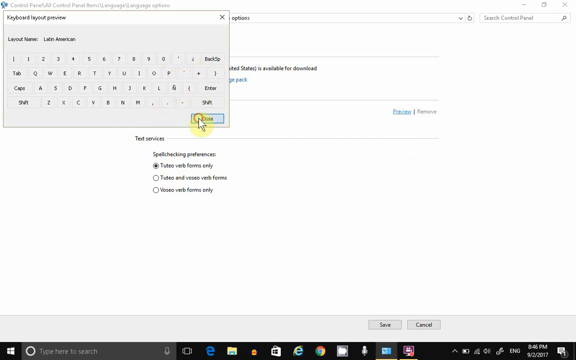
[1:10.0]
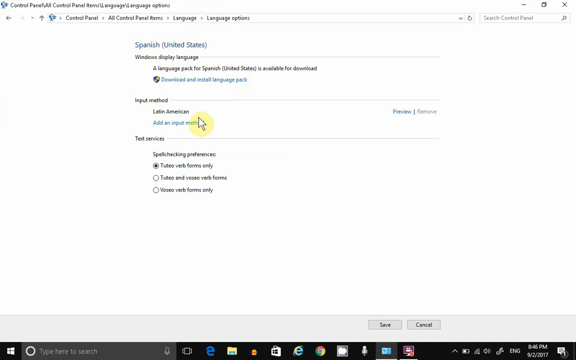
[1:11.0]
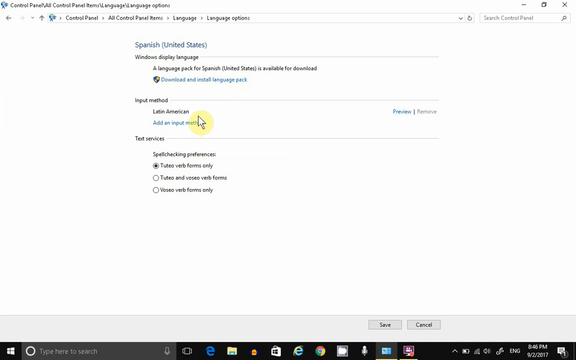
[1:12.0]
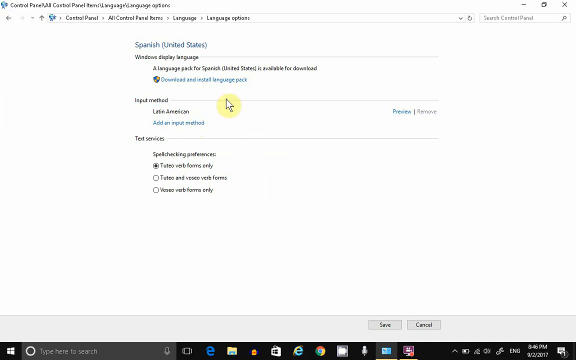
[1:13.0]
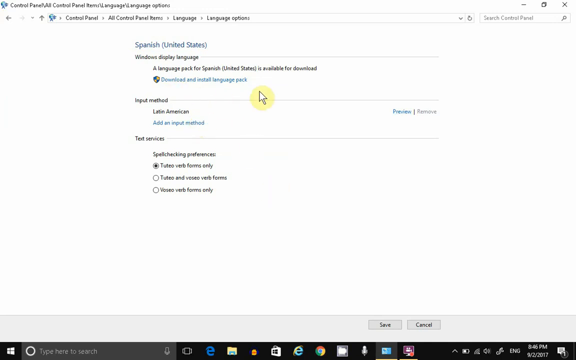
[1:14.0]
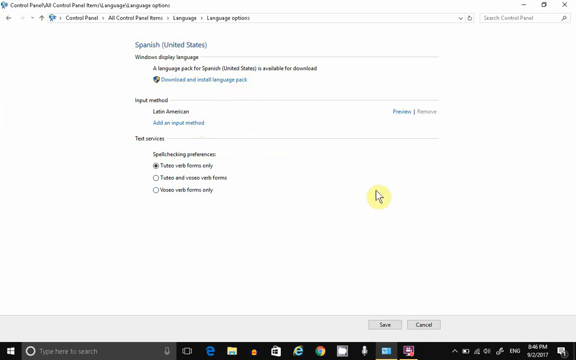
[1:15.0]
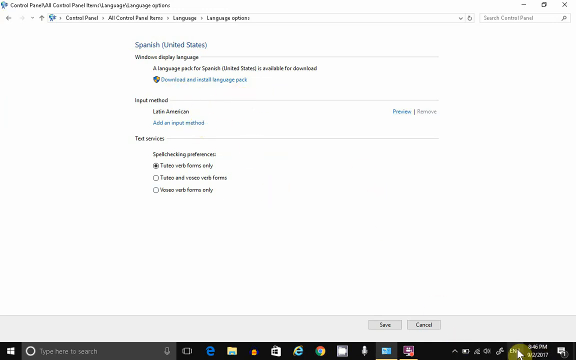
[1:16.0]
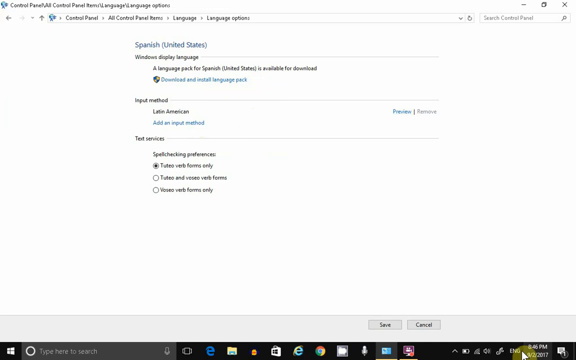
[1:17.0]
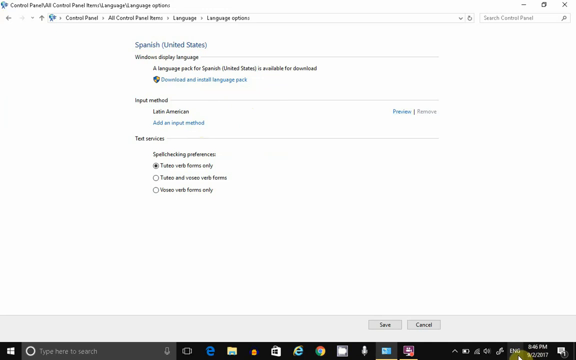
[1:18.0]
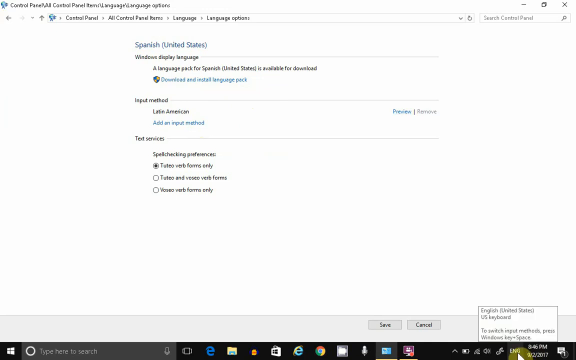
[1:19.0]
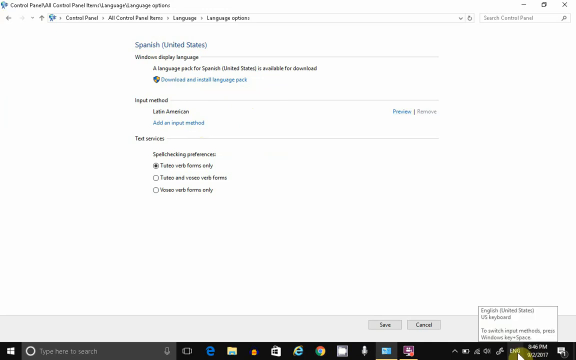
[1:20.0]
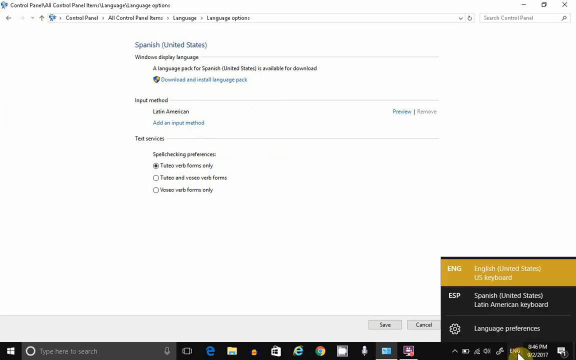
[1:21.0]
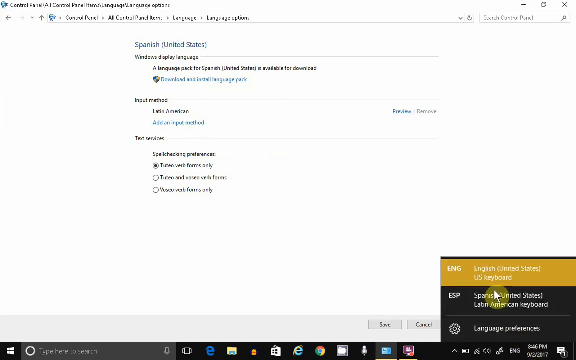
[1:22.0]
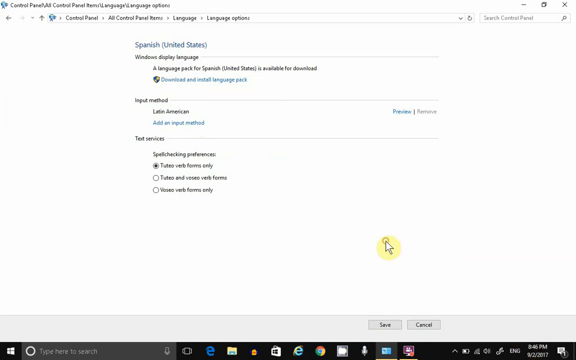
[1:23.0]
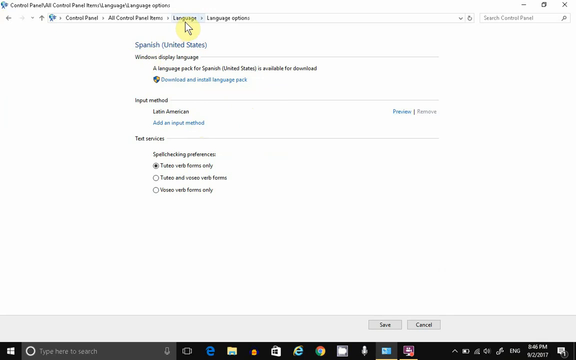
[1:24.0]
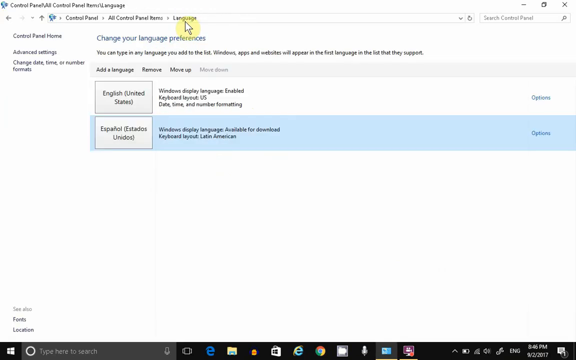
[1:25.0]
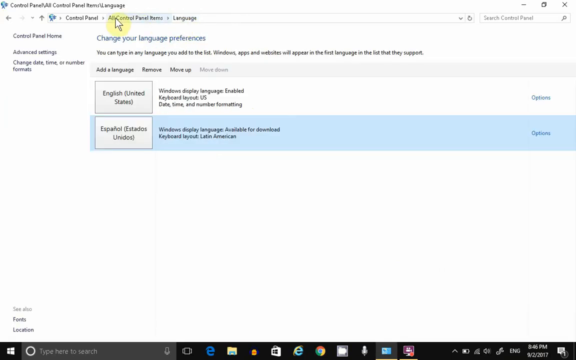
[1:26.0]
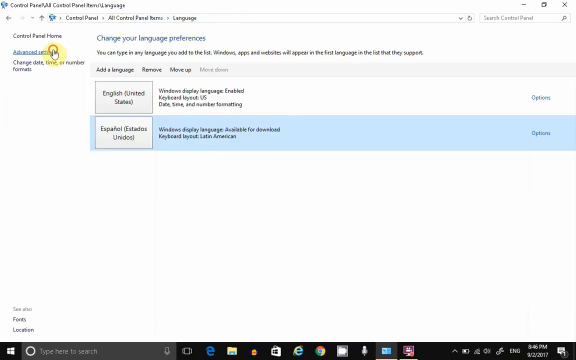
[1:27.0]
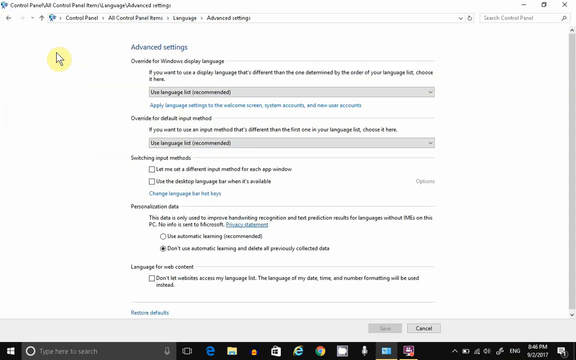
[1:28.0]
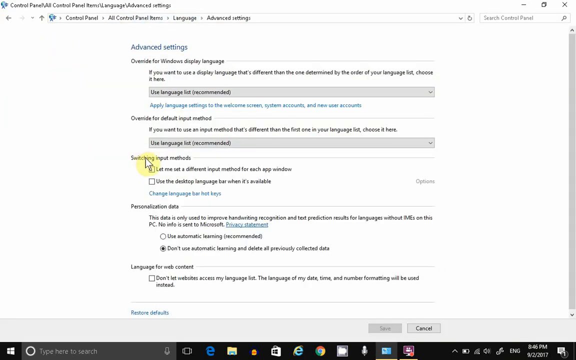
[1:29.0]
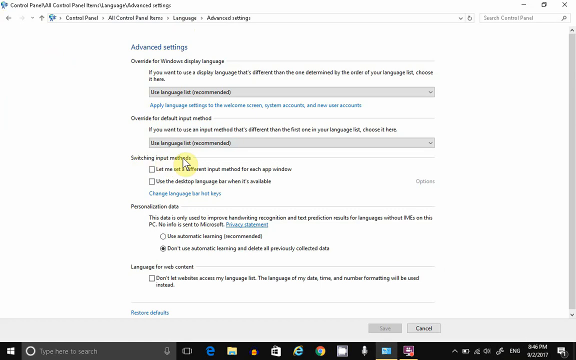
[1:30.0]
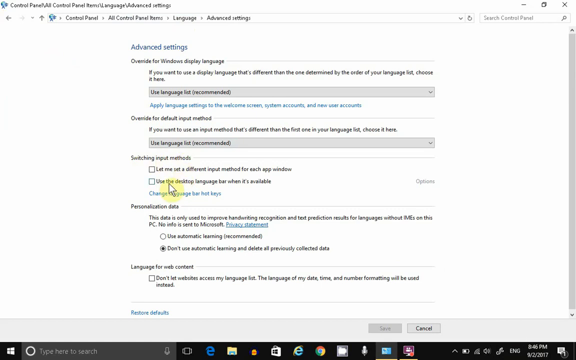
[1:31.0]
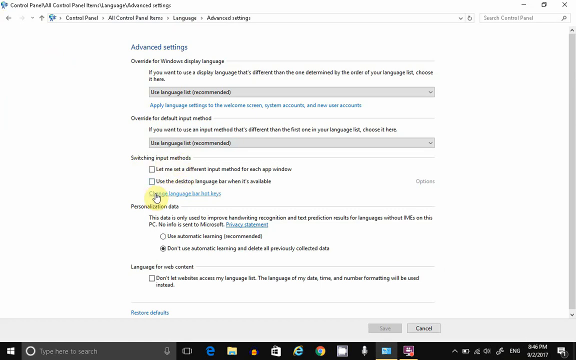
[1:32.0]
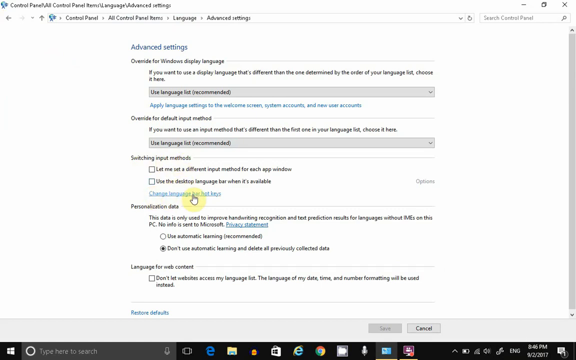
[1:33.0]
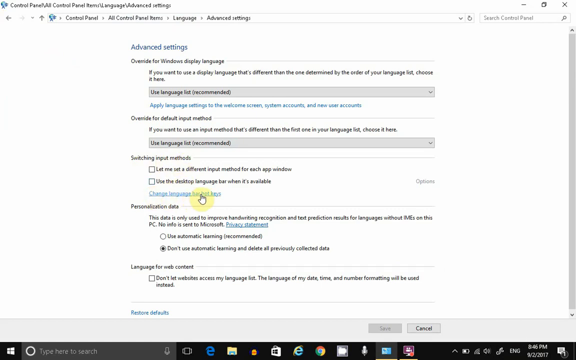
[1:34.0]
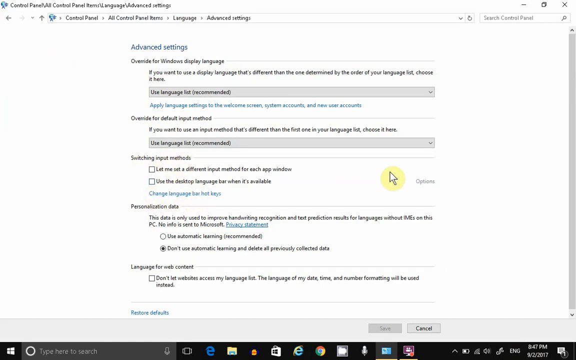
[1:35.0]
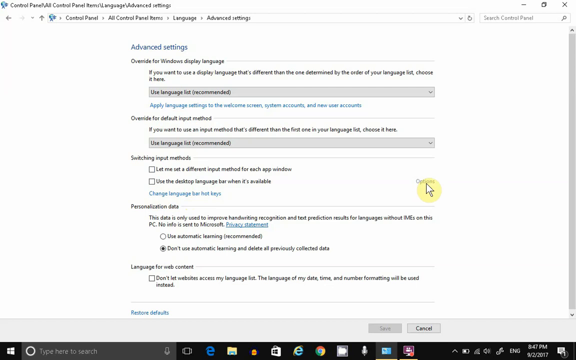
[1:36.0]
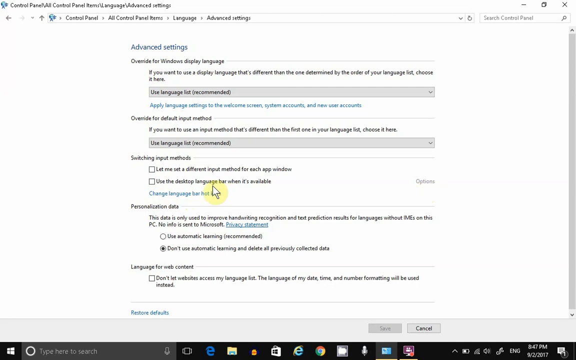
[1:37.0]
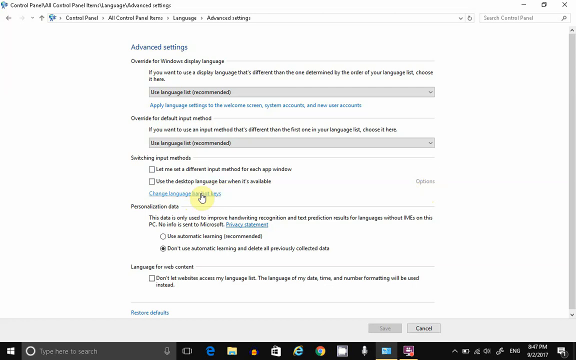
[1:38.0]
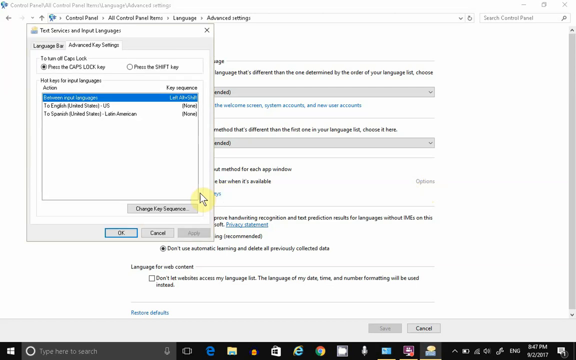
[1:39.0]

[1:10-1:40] A web page is shown, a Spanish page that says "United States", with a cursor moving rapidly in random places. The person clicks on language at the top, then follows different lines with the cursor without clicking anything. They click on options on the right-hand side, and a keyboard with letters pops up. They put the cursor on the bottom right bar and click it, and the keyboard goes away. The cursor keeps moving left to right and up and down, seemingly indecisively. At the bottom, a brownish pop-up with black appears; then the cursor moves back up to the top and follows along sentences from side to side.